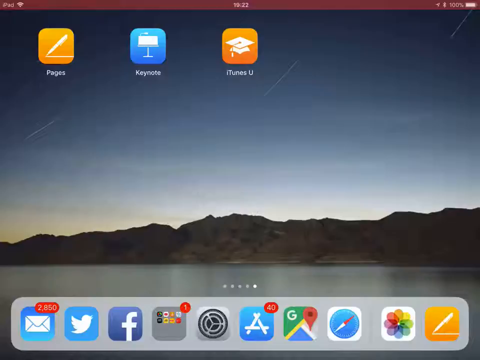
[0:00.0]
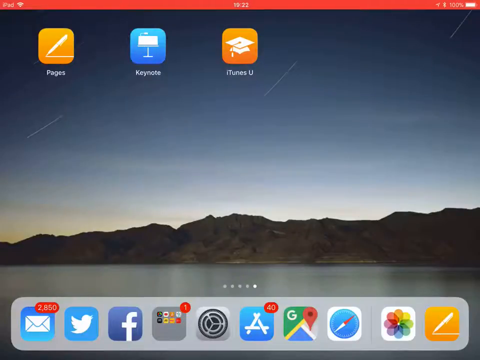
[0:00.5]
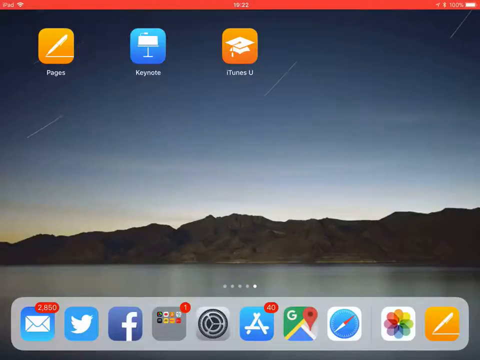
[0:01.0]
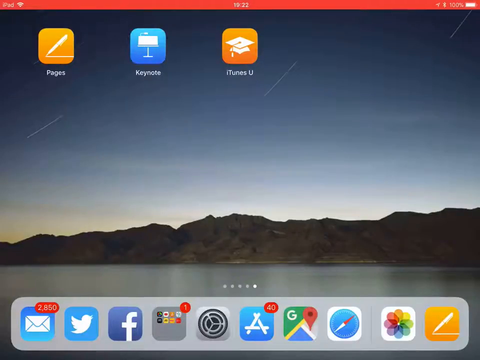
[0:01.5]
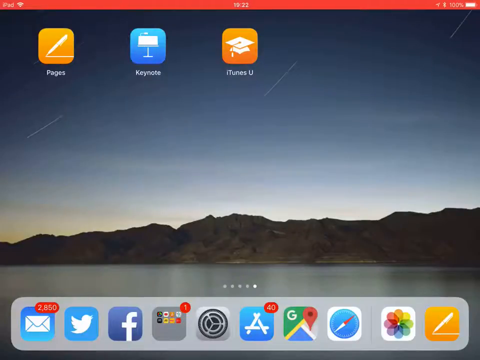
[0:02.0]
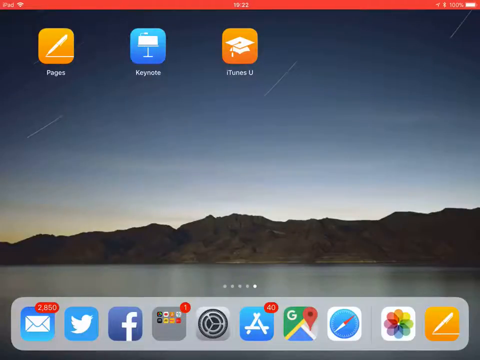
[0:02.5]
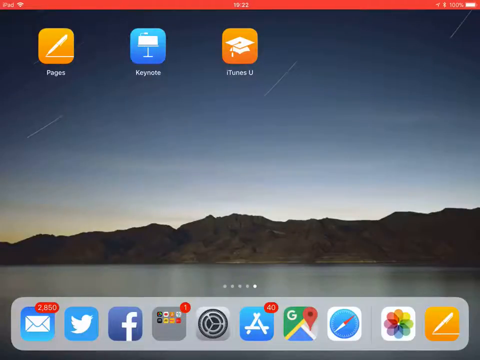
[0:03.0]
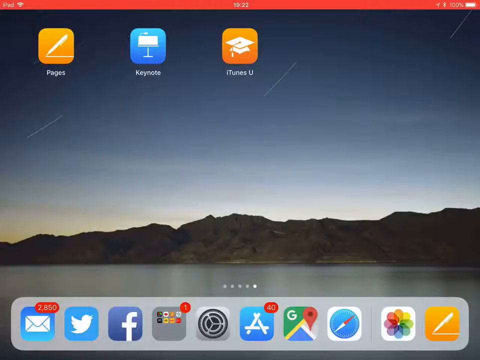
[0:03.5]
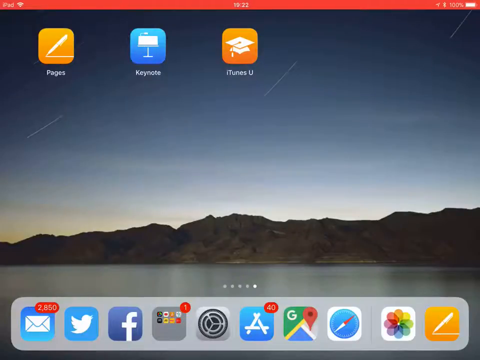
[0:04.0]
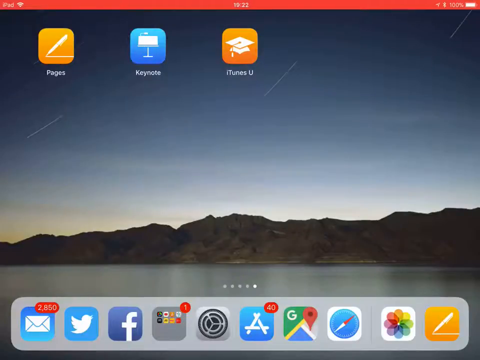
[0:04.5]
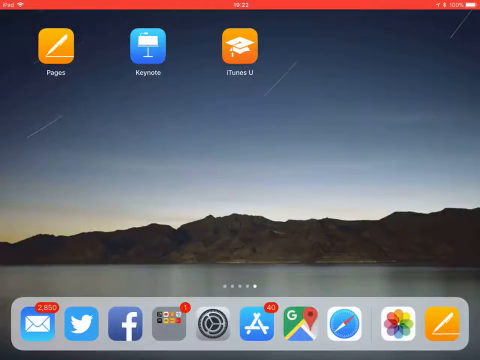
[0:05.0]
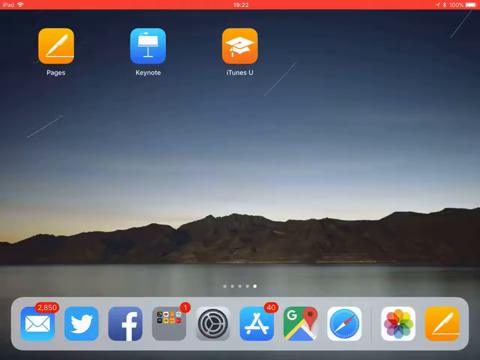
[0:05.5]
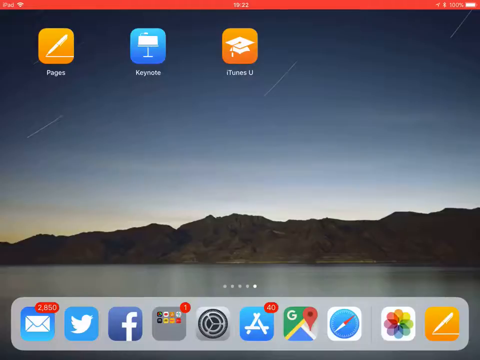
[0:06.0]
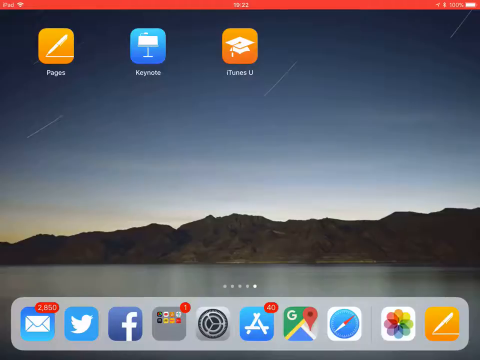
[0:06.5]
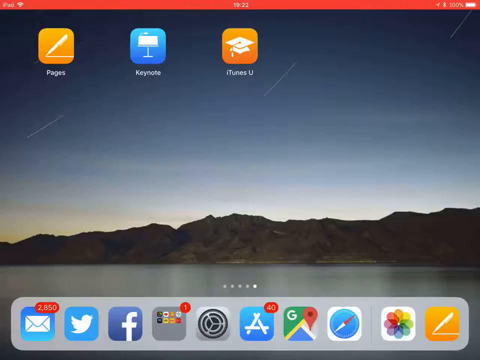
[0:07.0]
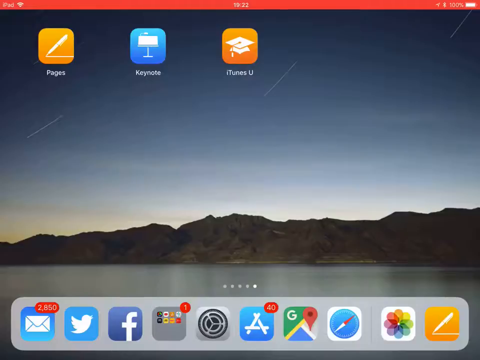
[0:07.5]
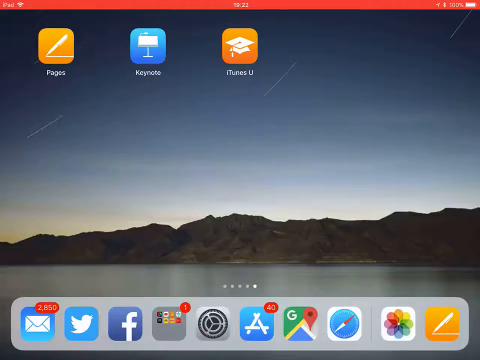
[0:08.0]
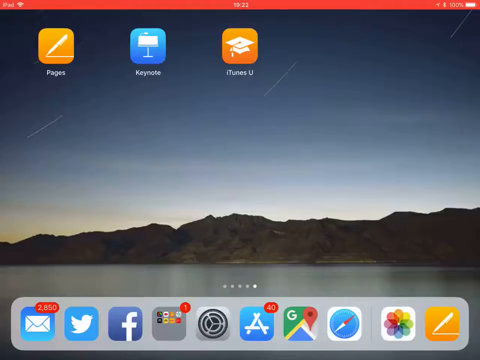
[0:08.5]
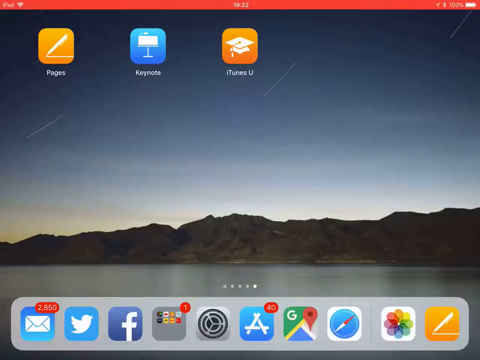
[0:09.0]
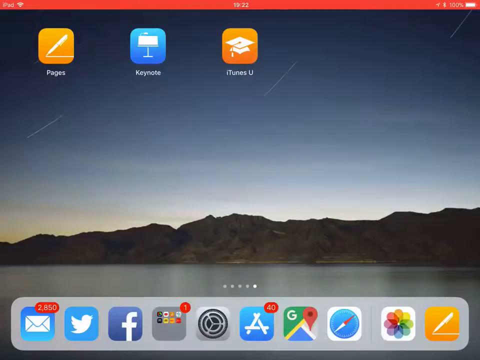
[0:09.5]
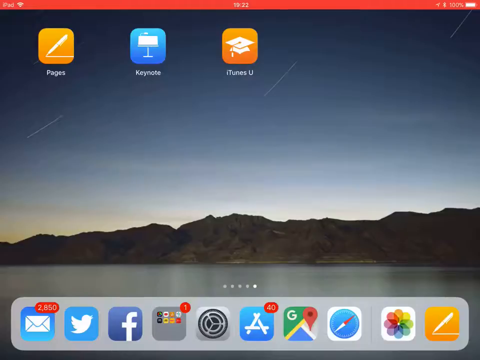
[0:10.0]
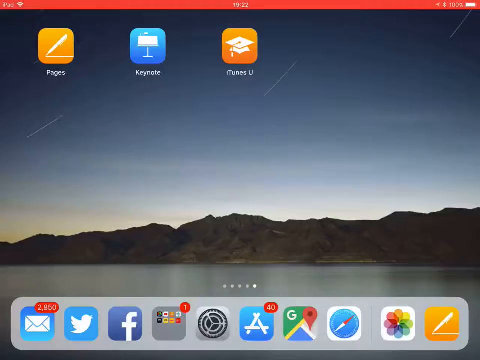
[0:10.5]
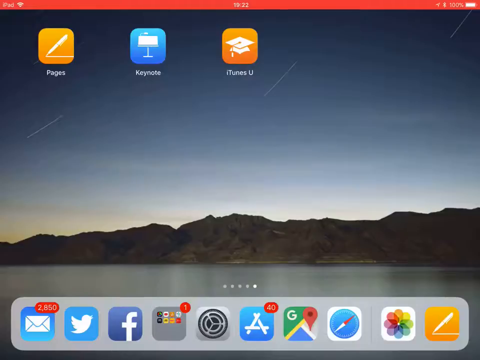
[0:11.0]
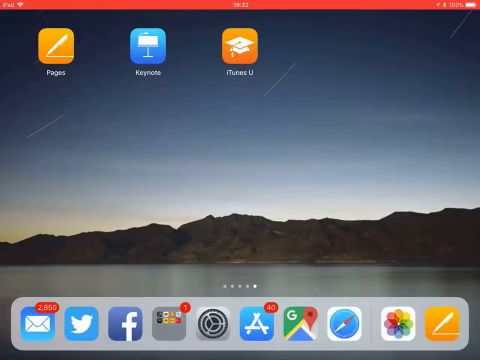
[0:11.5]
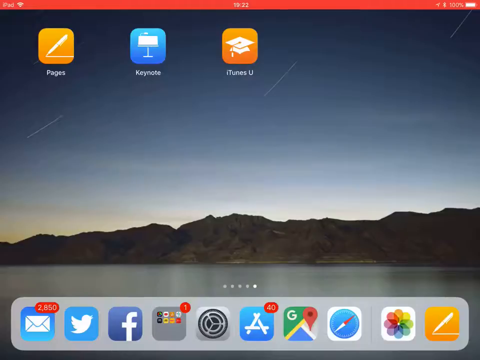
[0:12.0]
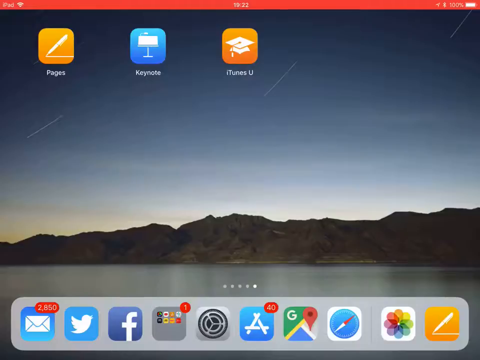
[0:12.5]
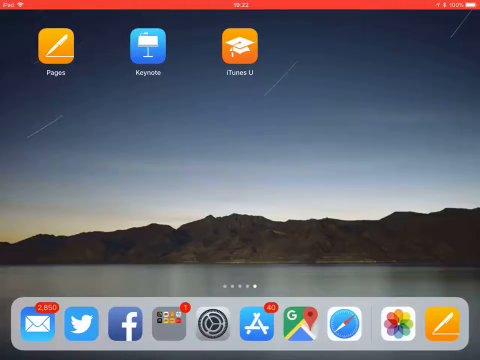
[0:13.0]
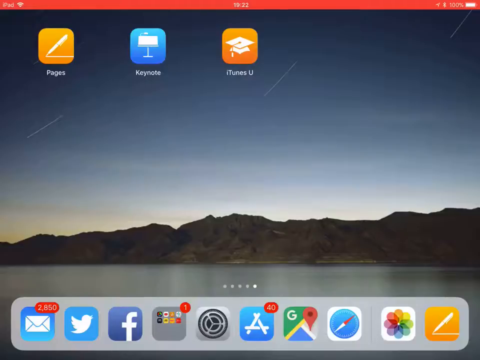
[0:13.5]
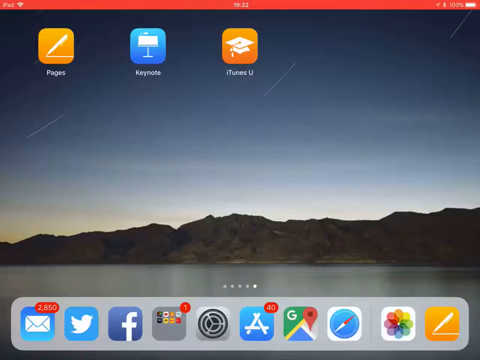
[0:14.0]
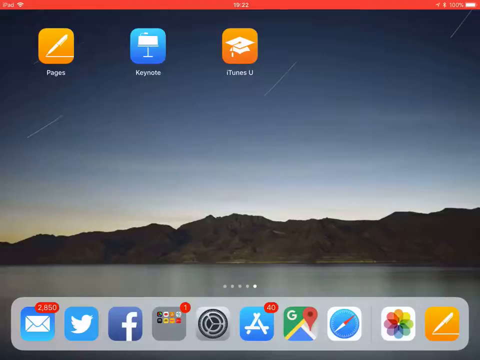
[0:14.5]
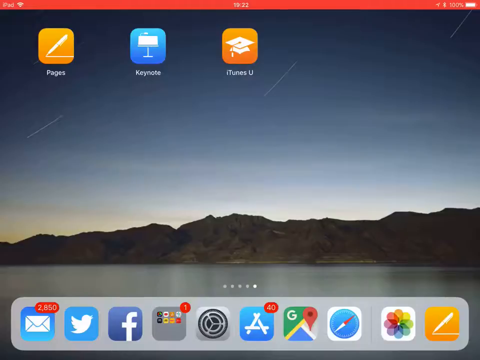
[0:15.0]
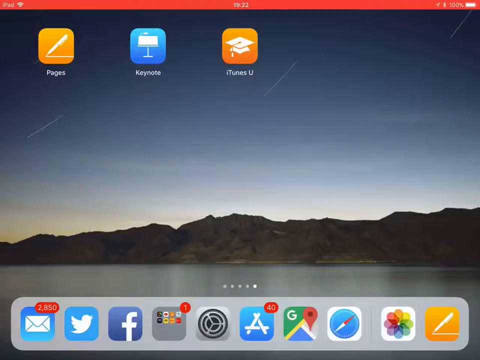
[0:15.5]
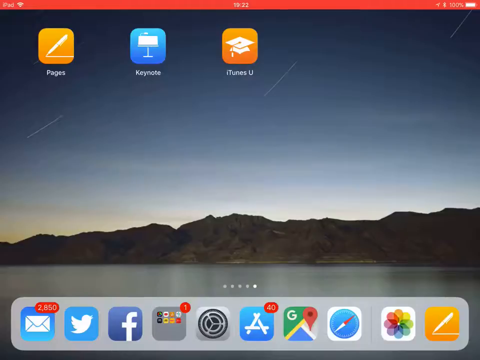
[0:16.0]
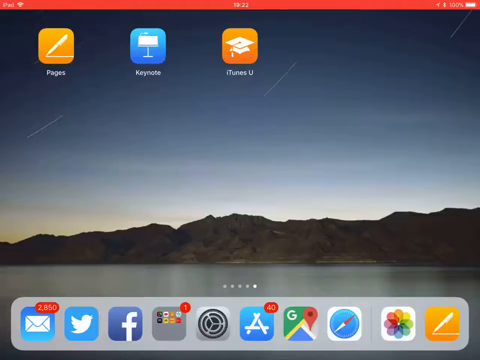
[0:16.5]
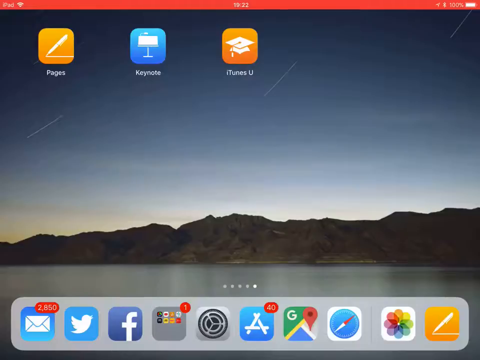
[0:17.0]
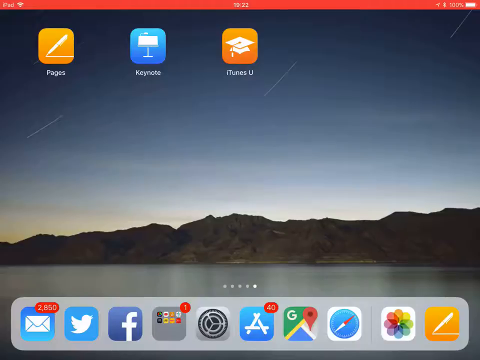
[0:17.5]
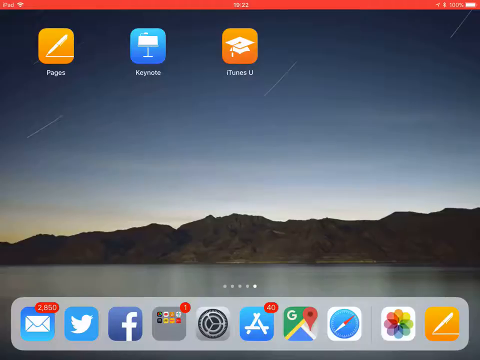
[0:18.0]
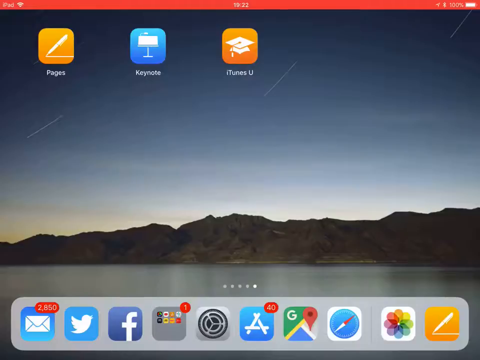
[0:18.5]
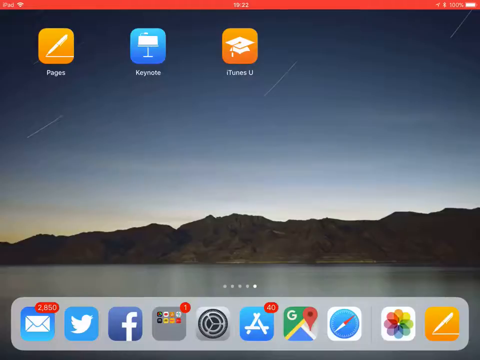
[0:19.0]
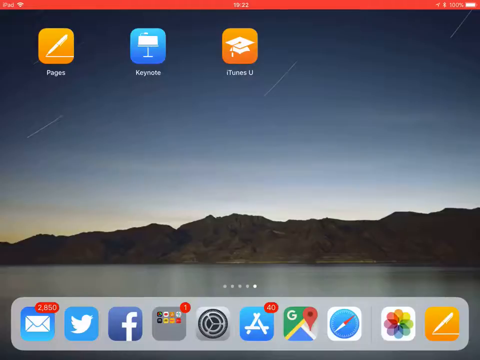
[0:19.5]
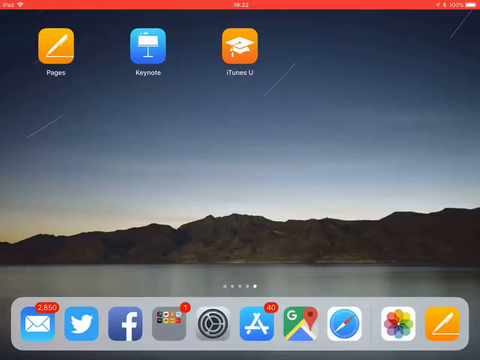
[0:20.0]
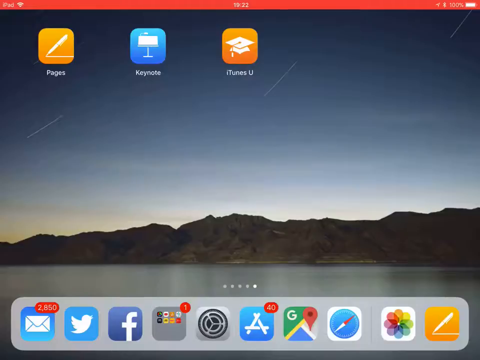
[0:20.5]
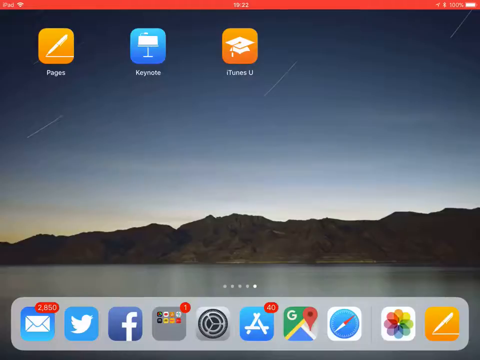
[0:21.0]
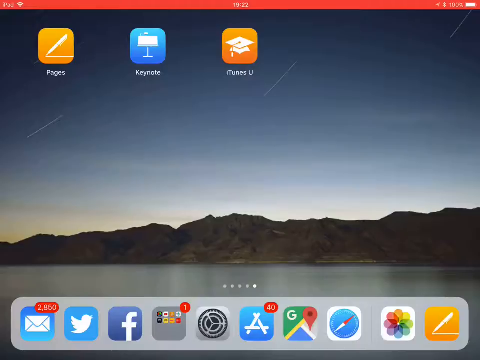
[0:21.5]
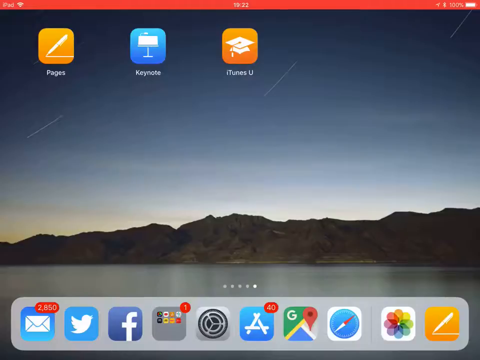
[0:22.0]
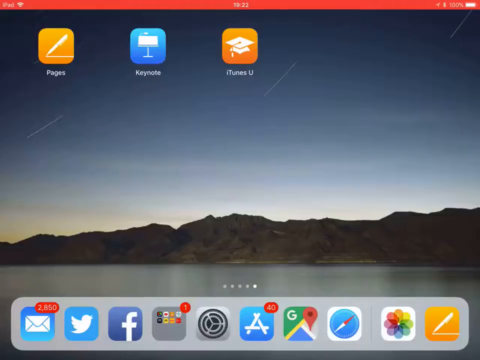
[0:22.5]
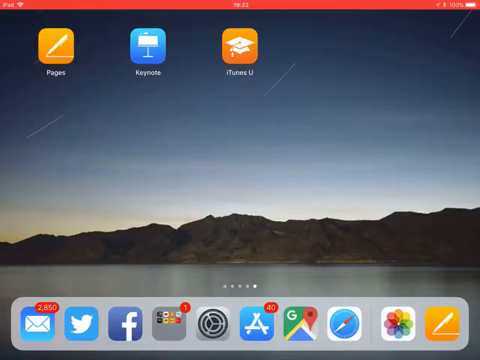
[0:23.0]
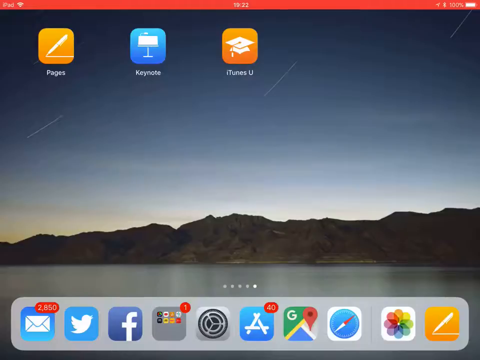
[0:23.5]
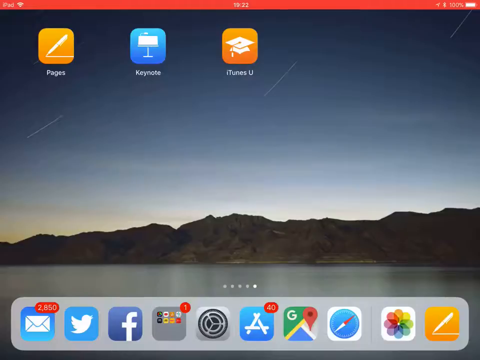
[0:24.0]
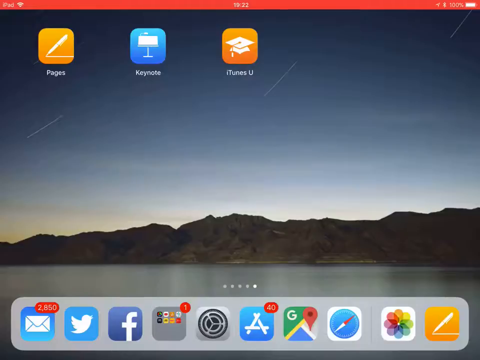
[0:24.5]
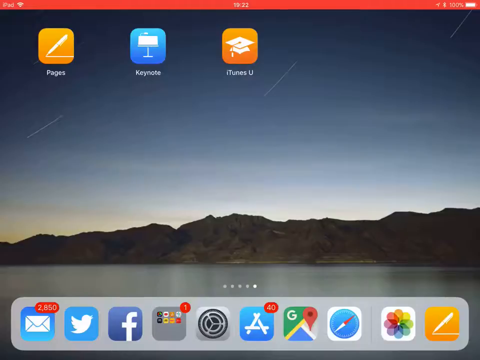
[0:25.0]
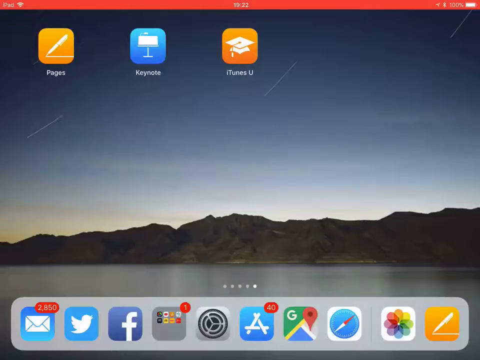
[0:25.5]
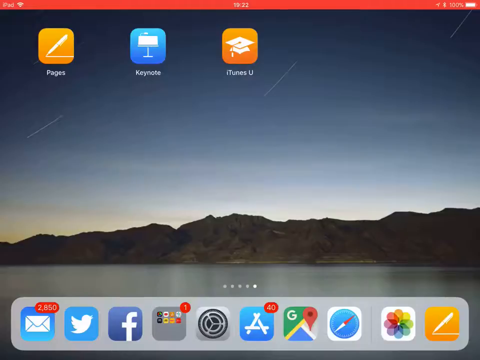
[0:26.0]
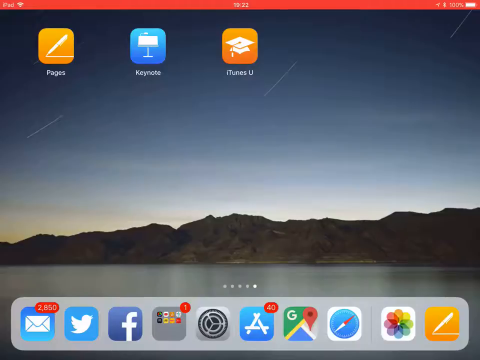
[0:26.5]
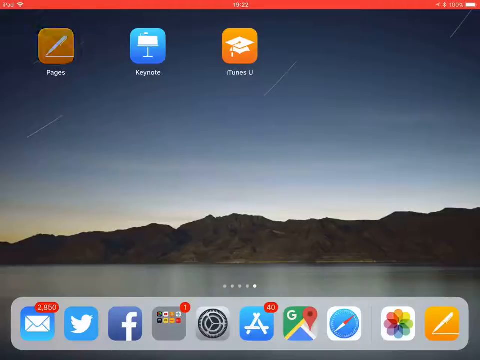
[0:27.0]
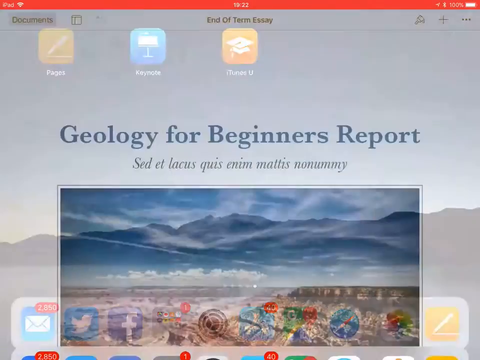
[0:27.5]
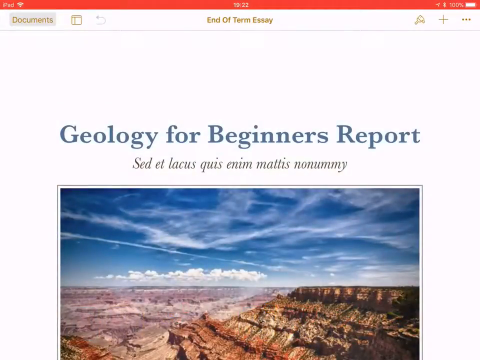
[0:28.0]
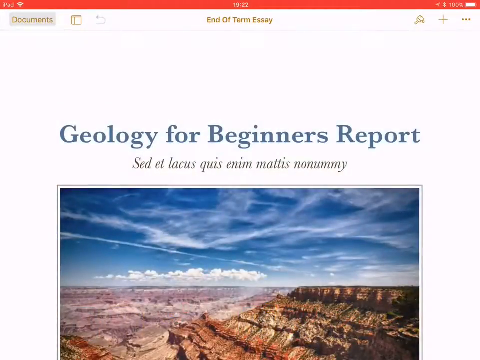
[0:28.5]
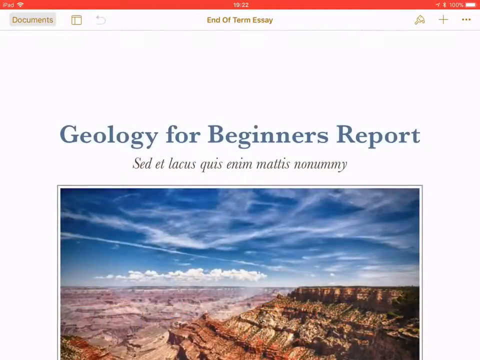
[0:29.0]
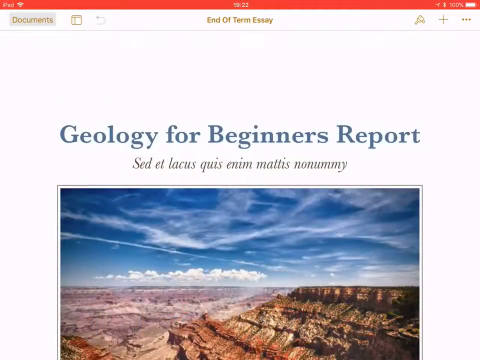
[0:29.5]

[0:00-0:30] The screen apparently belongs to an Apple device, possibly an iPad, an iPhone or a MacBook, and shows the default Apple icons: Email, Apple, Twitter, Facebook, Settings and Google Maps. At the top are iTunes, Keynote and Pages. An open page shows a Geology for Beginners report. The work area is very clean, with few icons and space left for more.